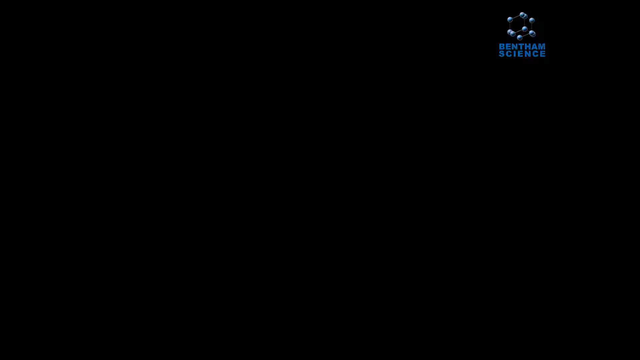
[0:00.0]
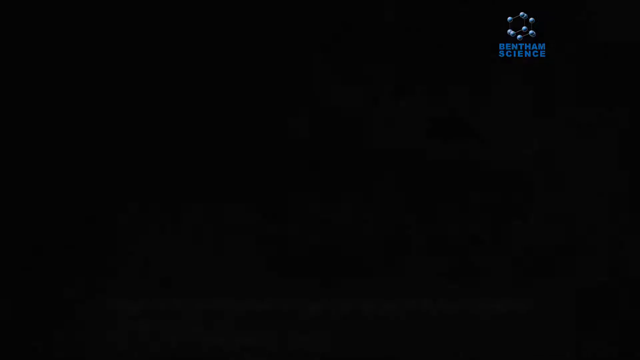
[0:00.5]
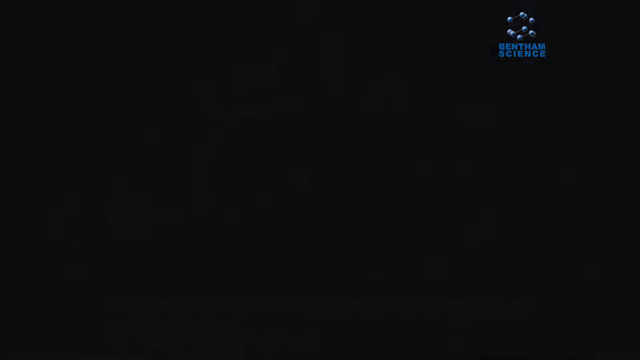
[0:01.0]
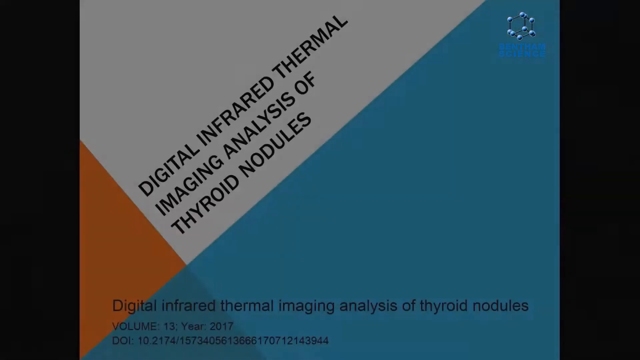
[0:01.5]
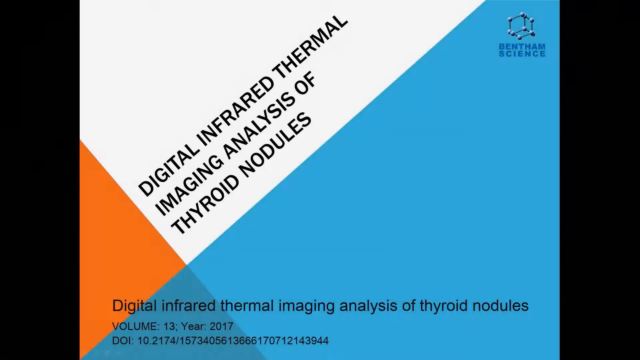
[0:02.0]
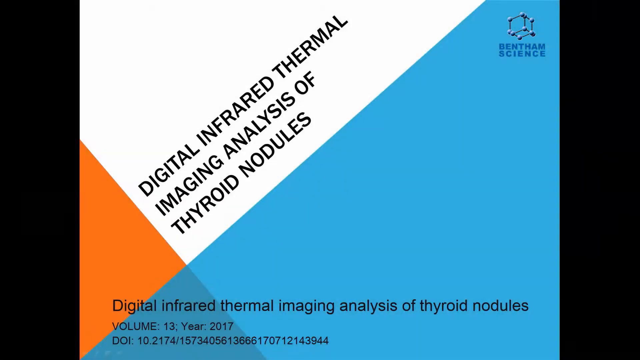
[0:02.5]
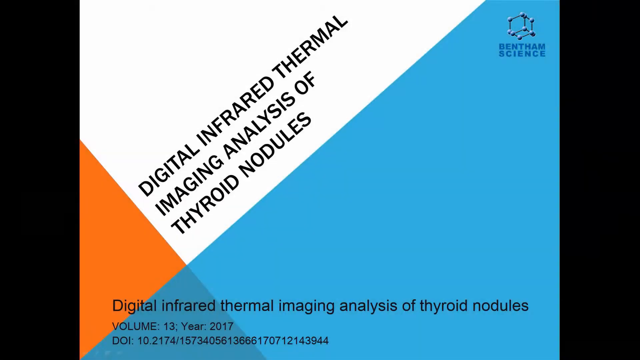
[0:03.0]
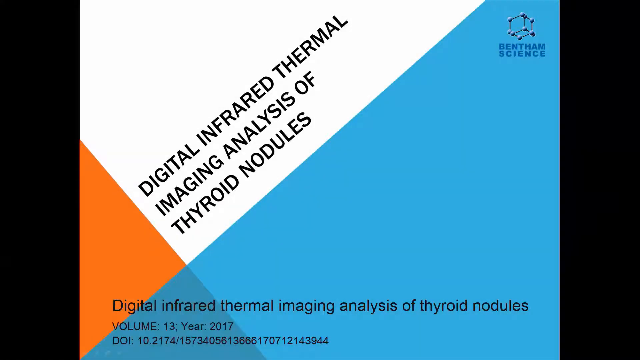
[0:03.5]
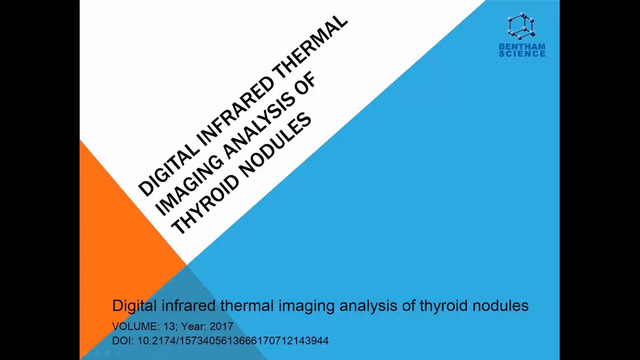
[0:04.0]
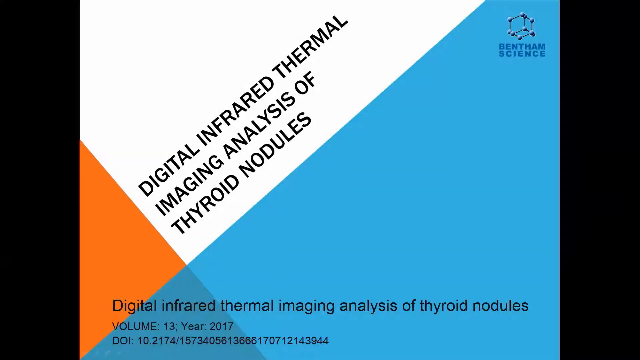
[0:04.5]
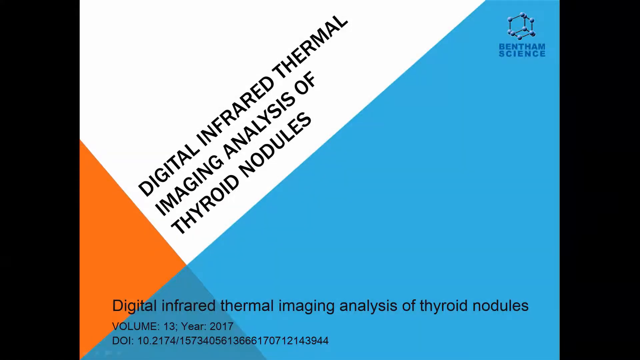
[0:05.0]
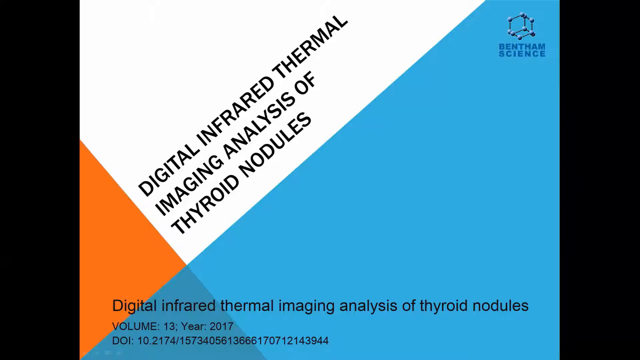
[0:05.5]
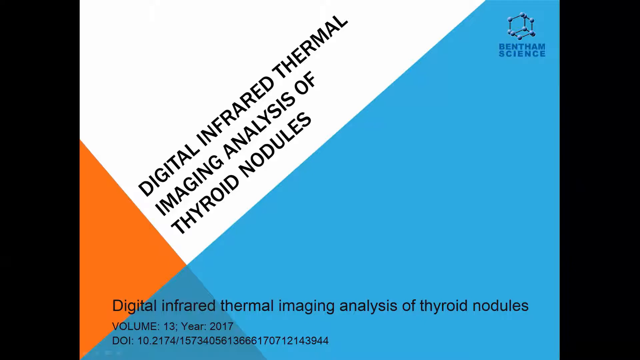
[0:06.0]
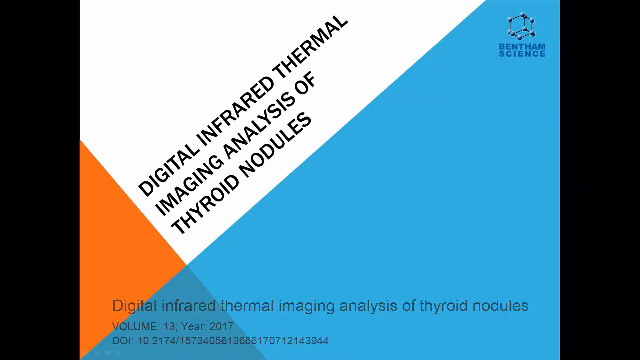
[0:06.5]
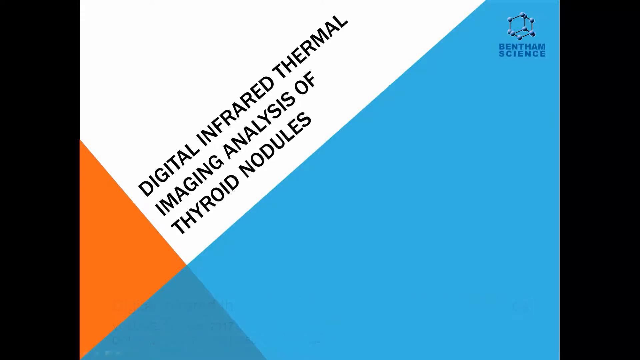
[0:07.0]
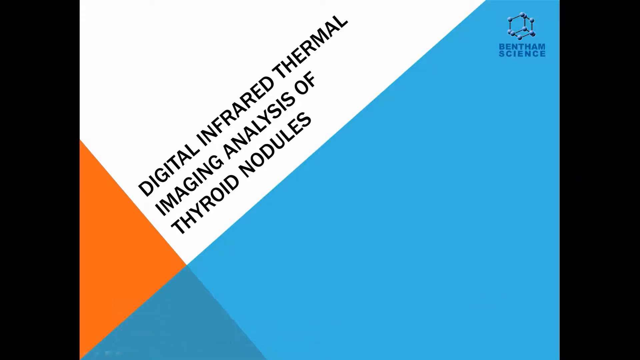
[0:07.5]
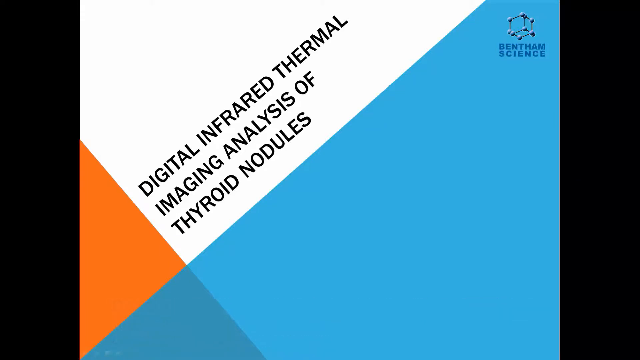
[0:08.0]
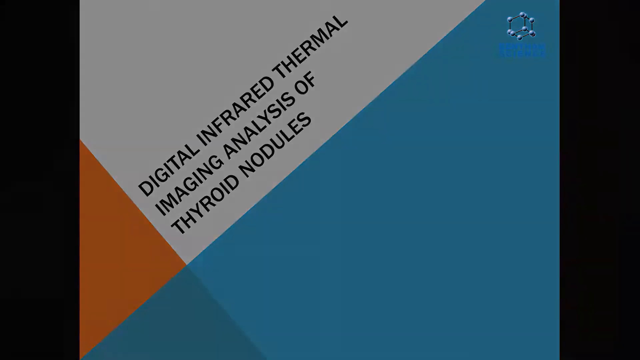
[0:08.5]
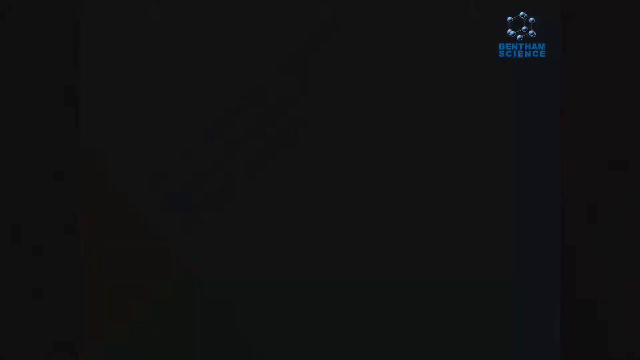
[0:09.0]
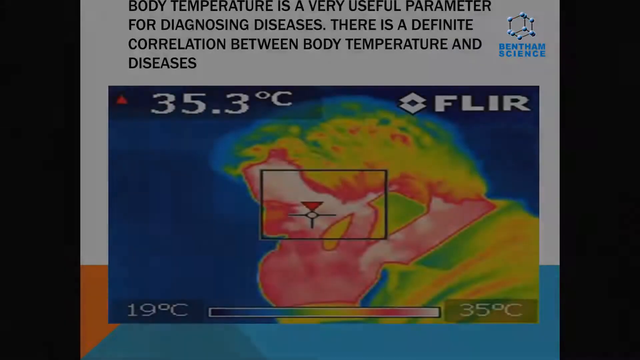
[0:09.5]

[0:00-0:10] A slide has four background colours, with most of it filled with white and light blue. In the upper left, a large white area shaped like an upside-down pyramid starts in the upper left corner and extends about three-fourths of the way to the right. To the lower left of this white section is an orange triangle whose base is on the left side of the image; it borders the white upside-down triangle. To the lower right of the orange triangle is a smaller aqua blue triangle, and the remaining space on the right side of the screen is light blue. In the white section, three lines of text set at a diagonal angle read "digital infrared thermal imaging analysis of thyroid nodules". At the bottom of the screen, black text reads "digital infrared thermal imaging analysis of thyroid nodules, volume three, year 2017". In the top right is an emblem of a cube made of lines, with a blue ball on each corner, and beneath the cube are the words "Bentham Science". The slide stays on screen for several seconds, then fades to black. Another slide follows: an infrared picture of a man on his phone, seen from his left side. He is surrounded by blue, with areas of red, yellow and green on him. A temperature of "35.3" Celsius appears up to the left of the man, the term "FLIR" appears to the right, and two white arrows pointing up and down are next to the FLIR text.